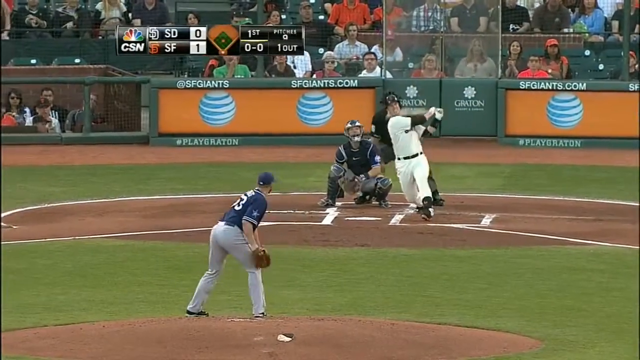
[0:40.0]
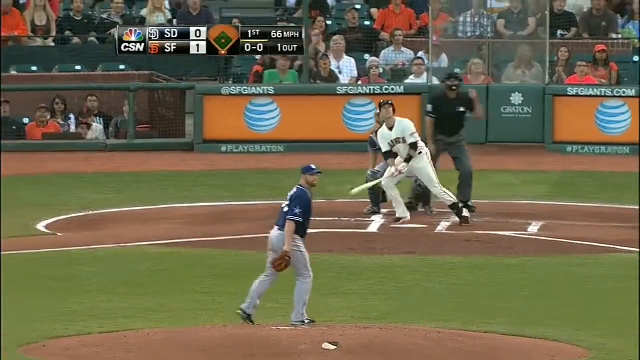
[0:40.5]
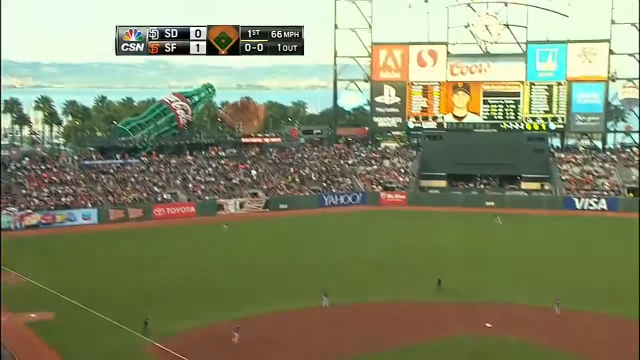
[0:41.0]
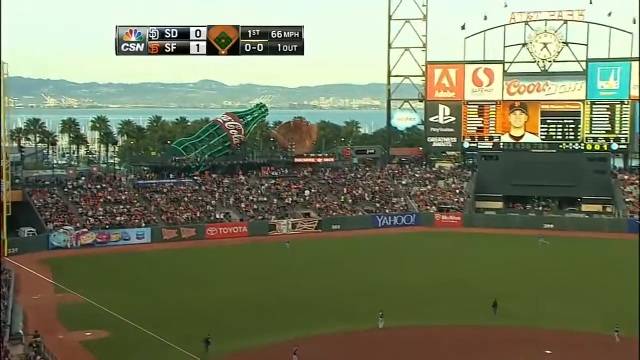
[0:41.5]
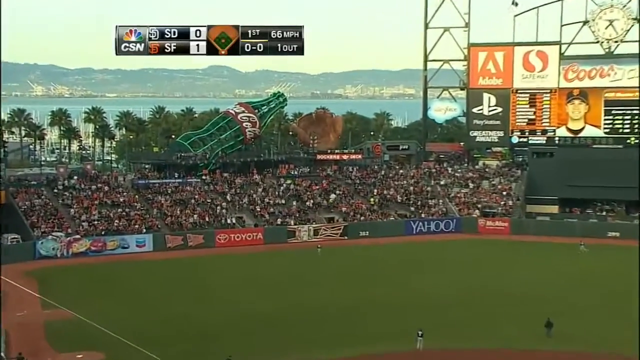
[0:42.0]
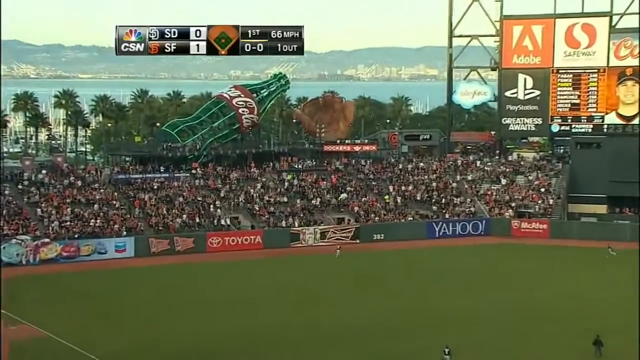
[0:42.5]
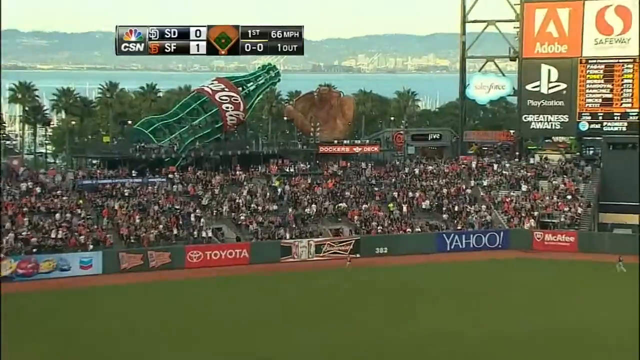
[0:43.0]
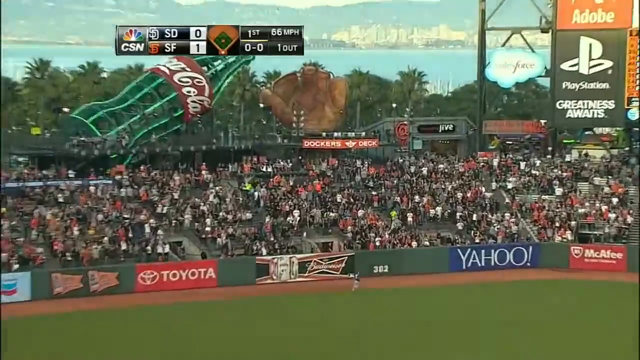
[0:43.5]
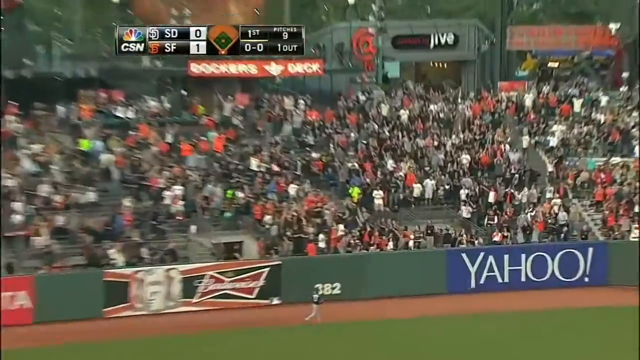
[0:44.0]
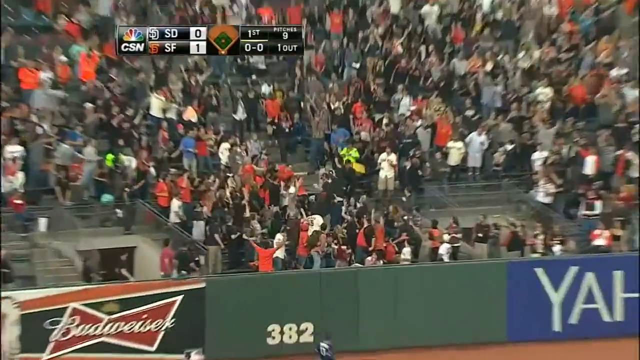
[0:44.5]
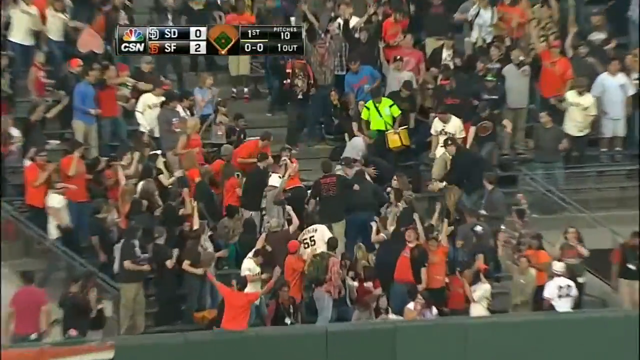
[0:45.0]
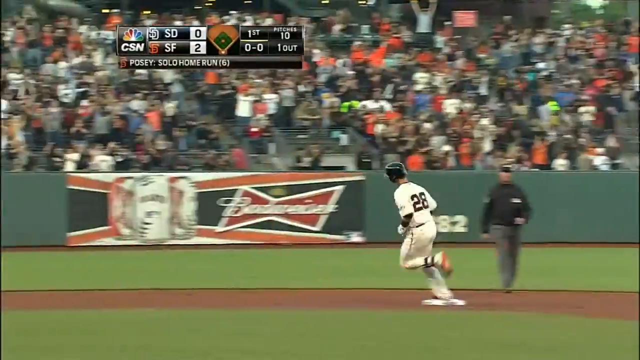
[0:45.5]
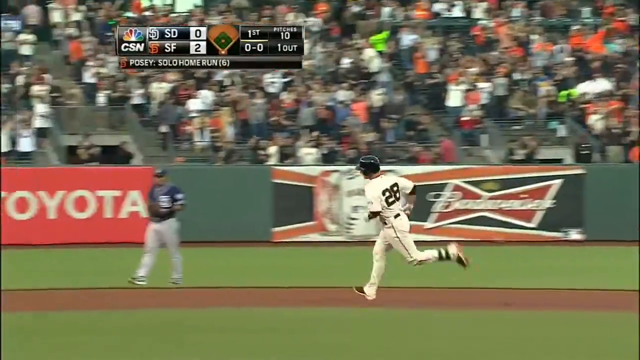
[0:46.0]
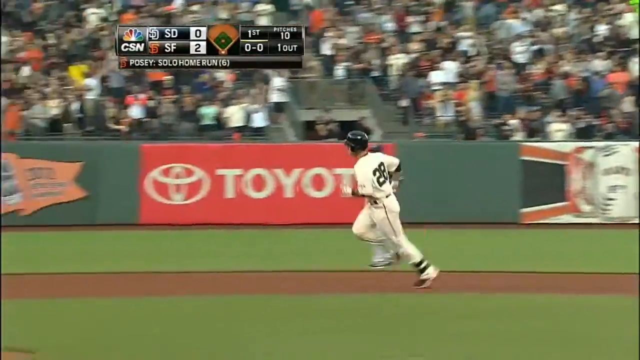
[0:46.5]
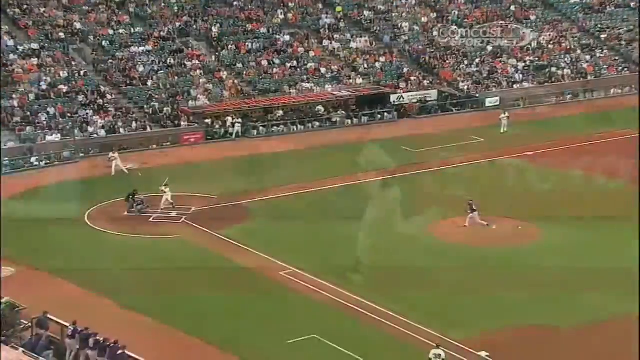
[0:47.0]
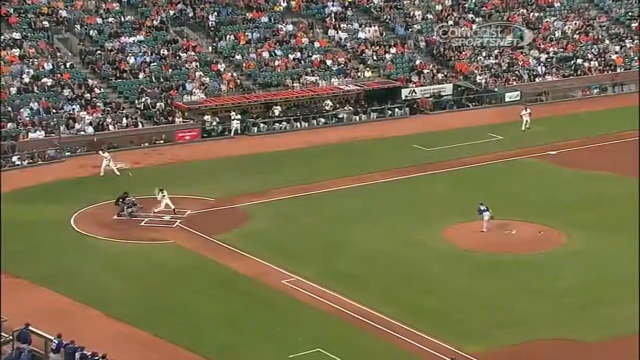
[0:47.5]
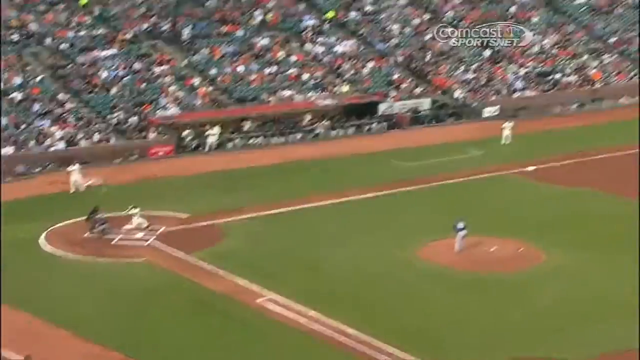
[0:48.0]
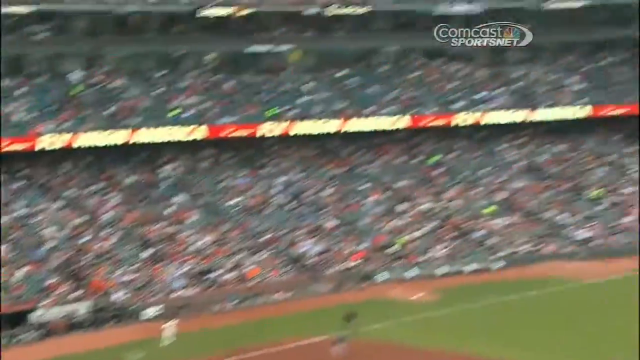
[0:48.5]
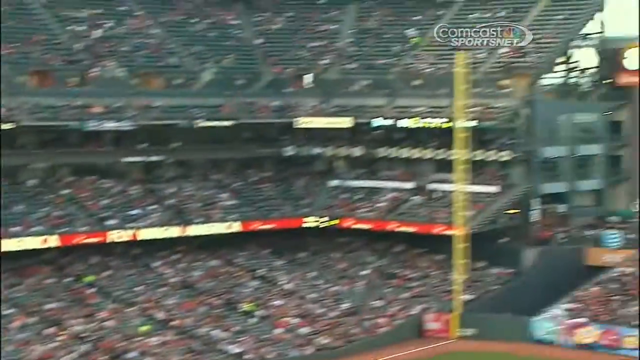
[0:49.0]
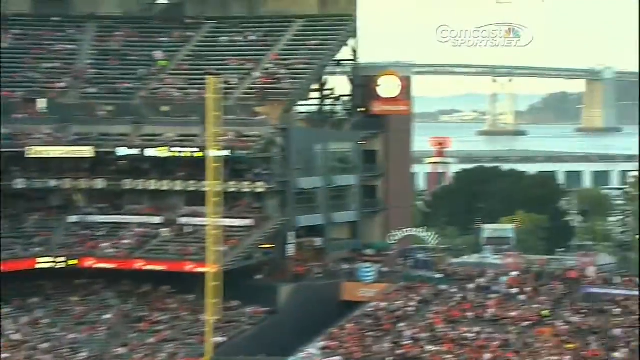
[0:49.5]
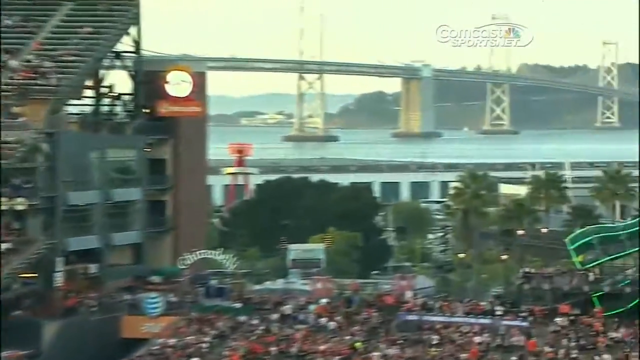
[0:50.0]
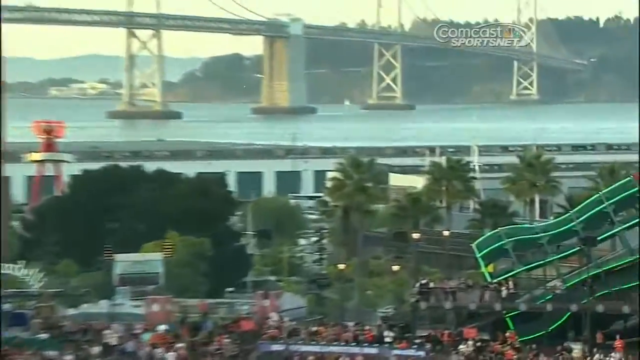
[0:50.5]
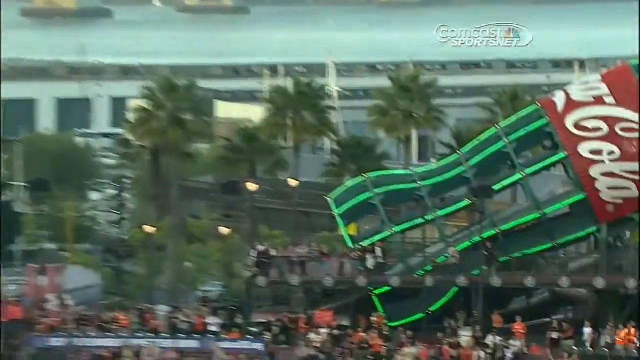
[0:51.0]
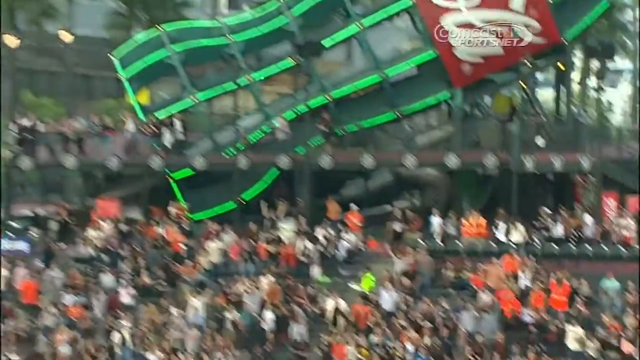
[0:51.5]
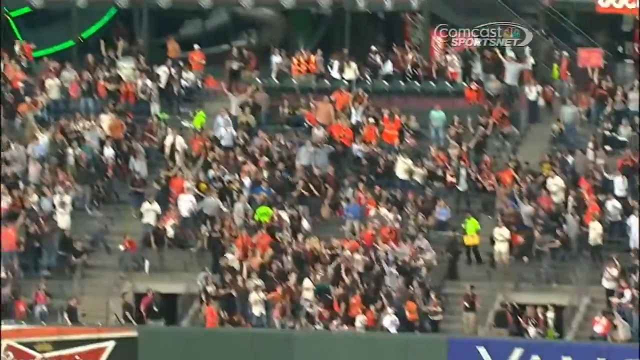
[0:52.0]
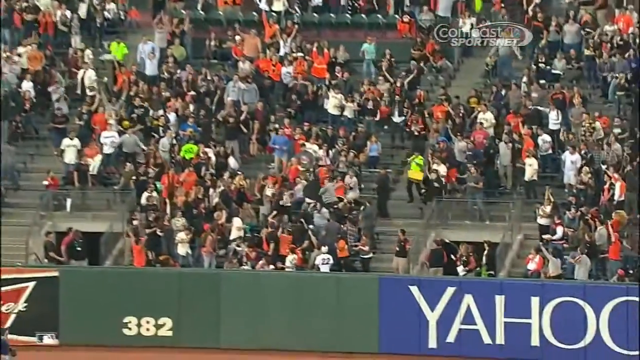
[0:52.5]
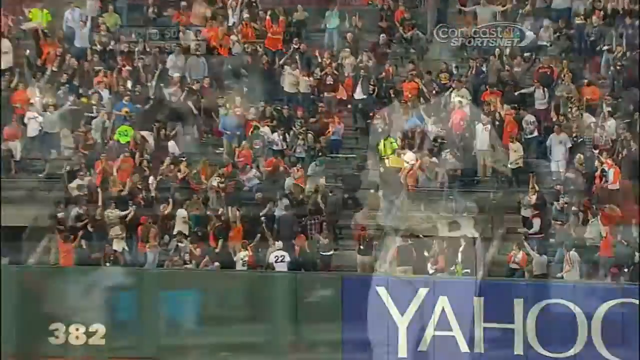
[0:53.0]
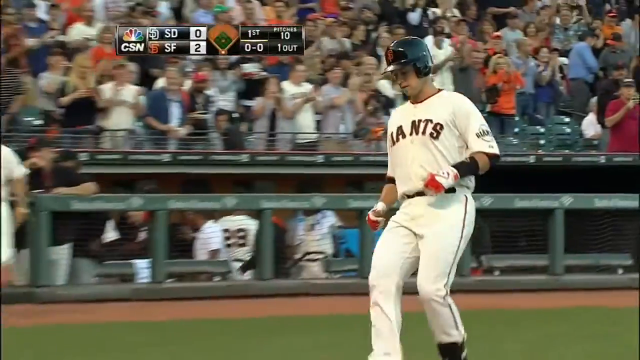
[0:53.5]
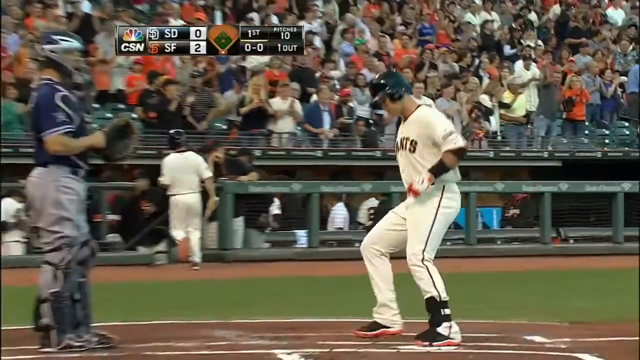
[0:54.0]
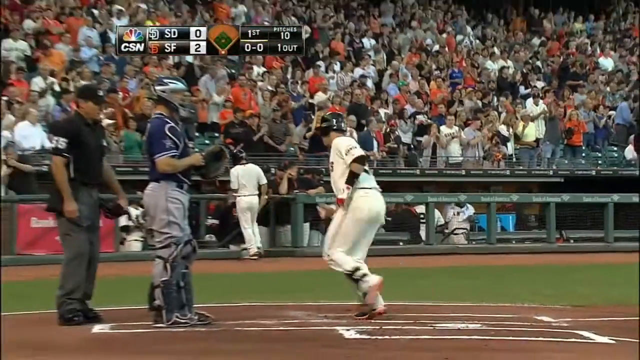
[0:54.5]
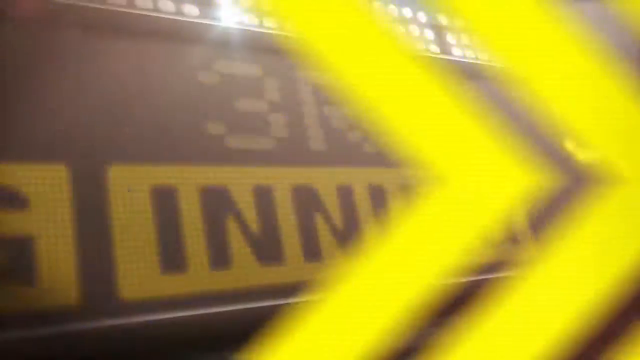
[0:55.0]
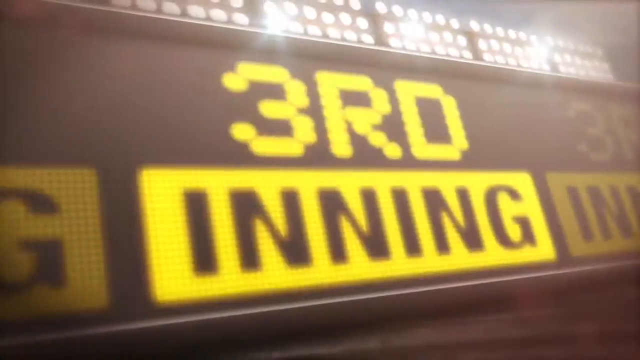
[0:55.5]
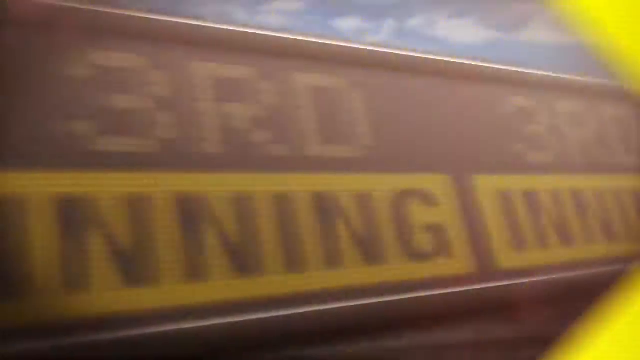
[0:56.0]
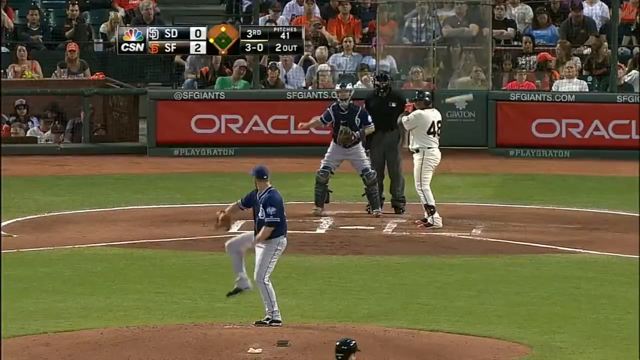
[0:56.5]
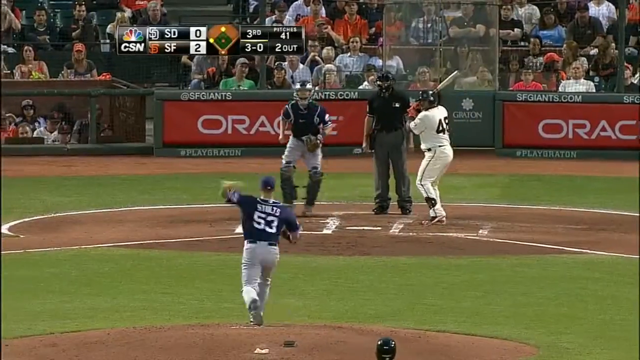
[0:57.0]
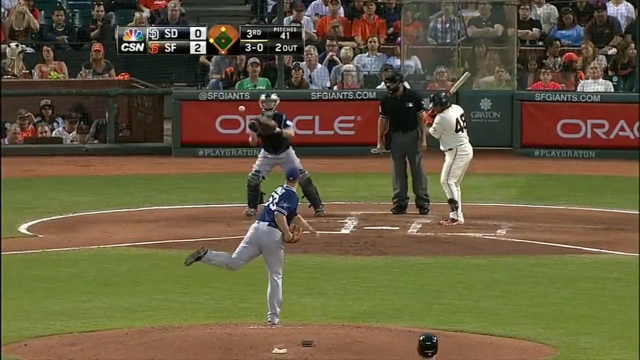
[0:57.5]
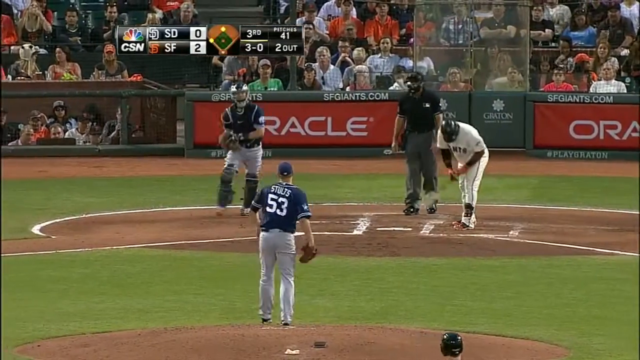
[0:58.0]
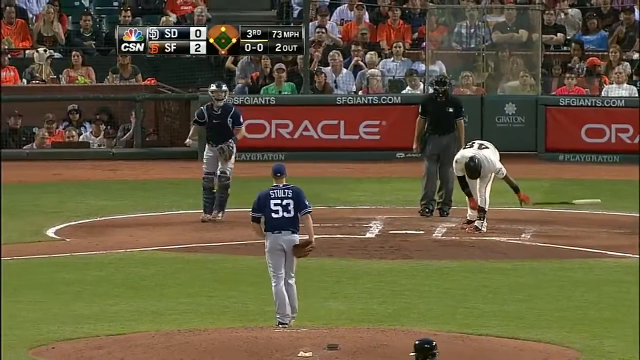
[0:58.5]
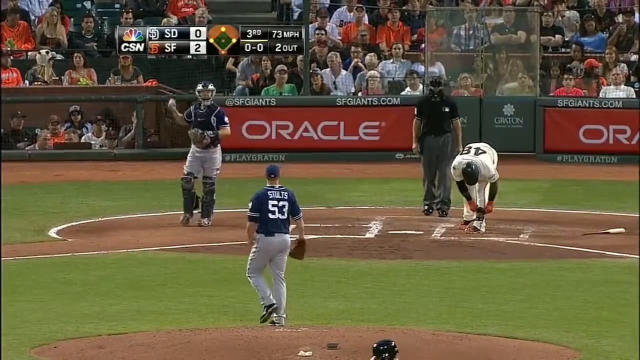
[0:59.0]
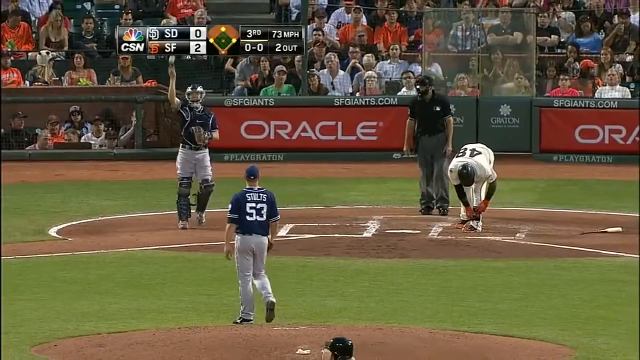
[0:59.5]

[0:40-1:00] In the Major League Baseball game between the San Diego Padres and the home team San Francisco Giants, it is the bottom of the first with one out and the score San Francisco 1, San Diego 0. The left-handed pitcher winds up to the right-handed batter, who blasts one over the center wall out of left center, close to about 400 feet, making it 2-0 San Francisco. A Comcast Sportsnet watermark is visible. Later, in the third inning with two men on, the Padres intentionally walk number 48, a San Francisco Giants hitter.